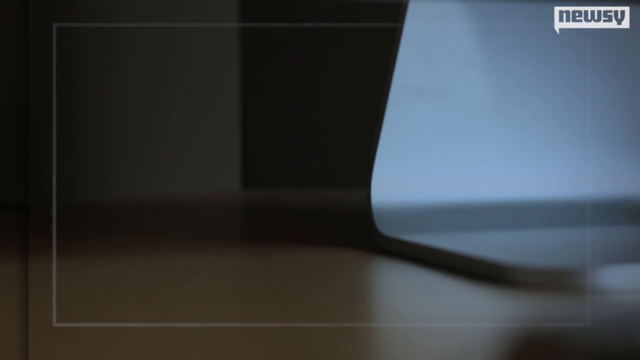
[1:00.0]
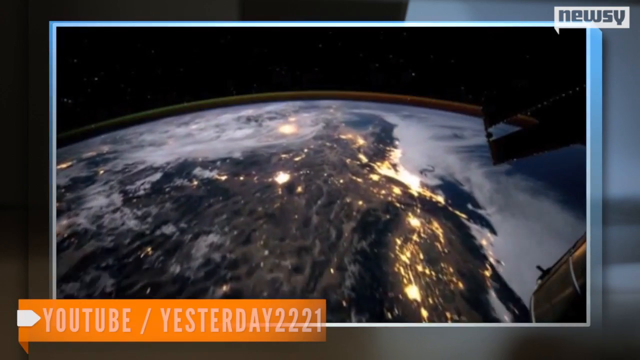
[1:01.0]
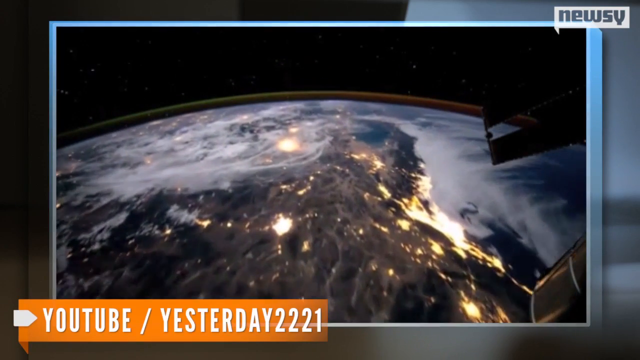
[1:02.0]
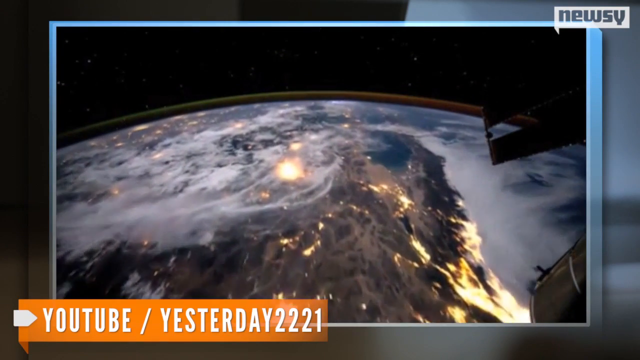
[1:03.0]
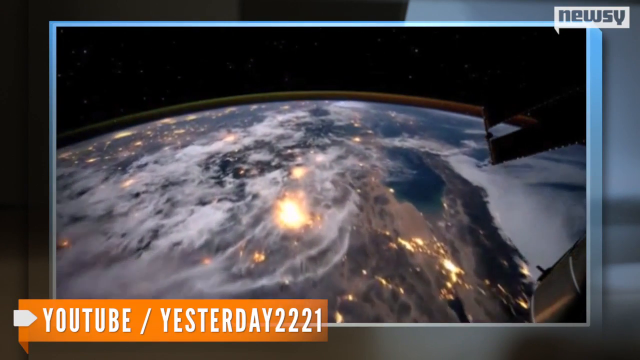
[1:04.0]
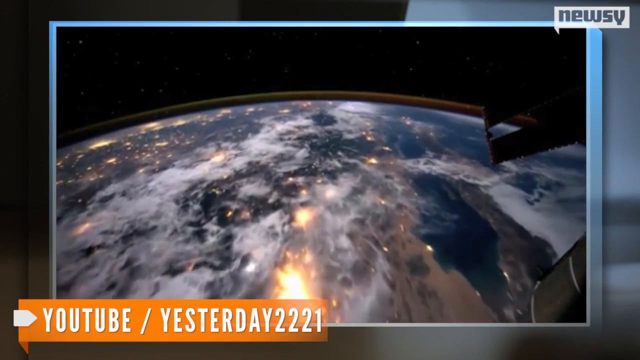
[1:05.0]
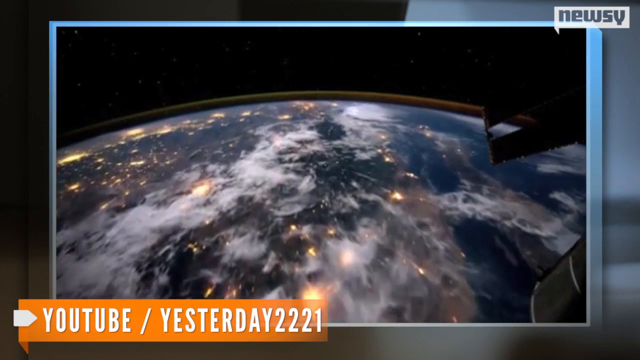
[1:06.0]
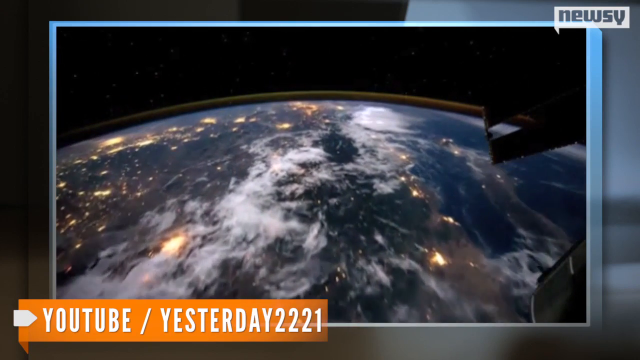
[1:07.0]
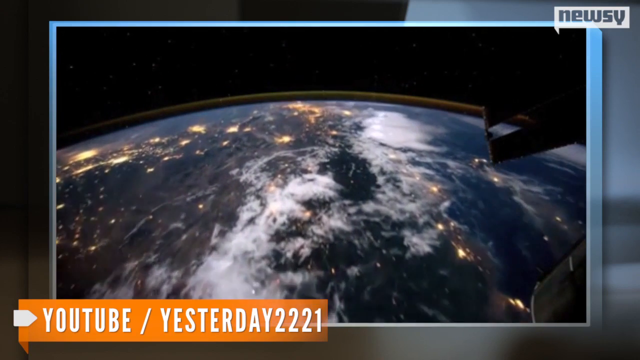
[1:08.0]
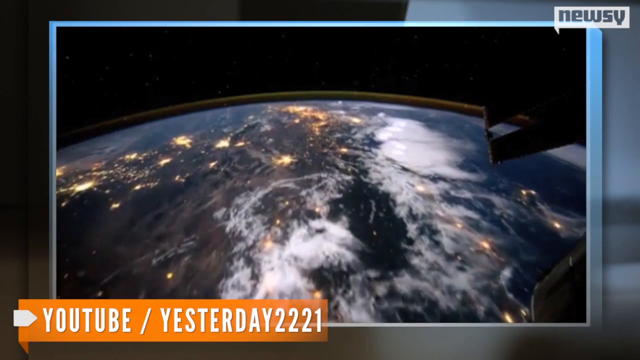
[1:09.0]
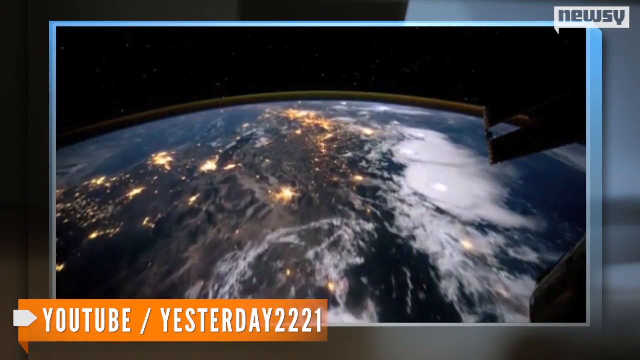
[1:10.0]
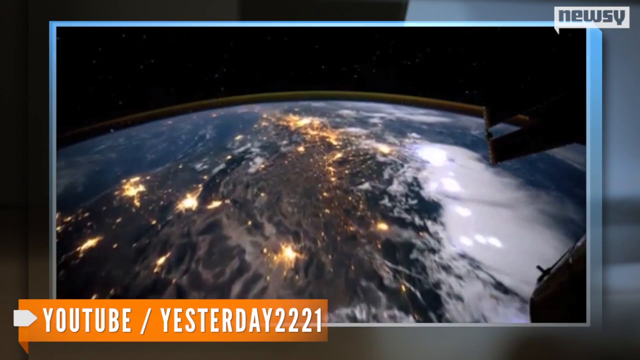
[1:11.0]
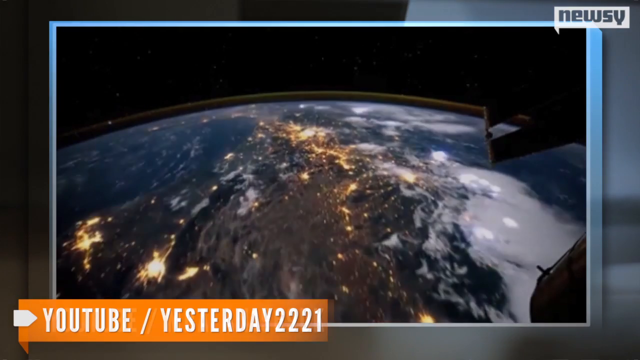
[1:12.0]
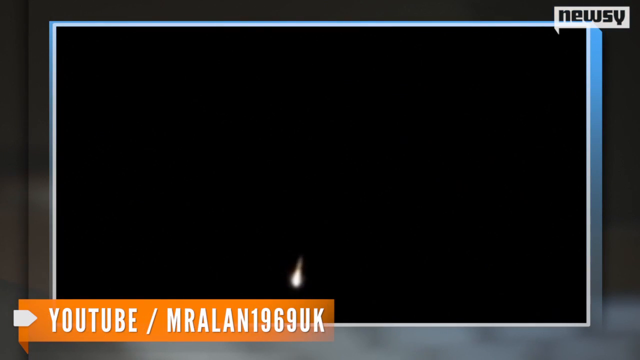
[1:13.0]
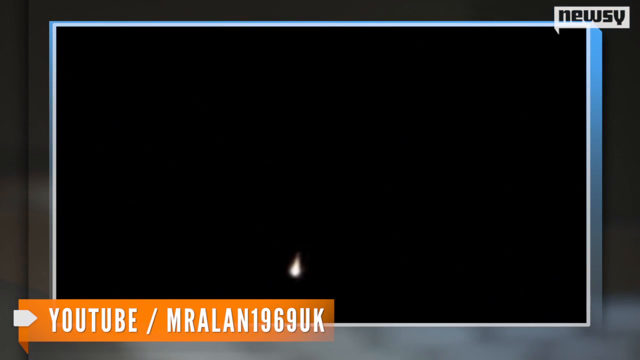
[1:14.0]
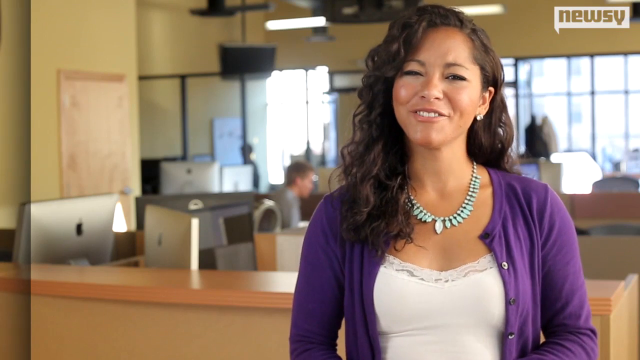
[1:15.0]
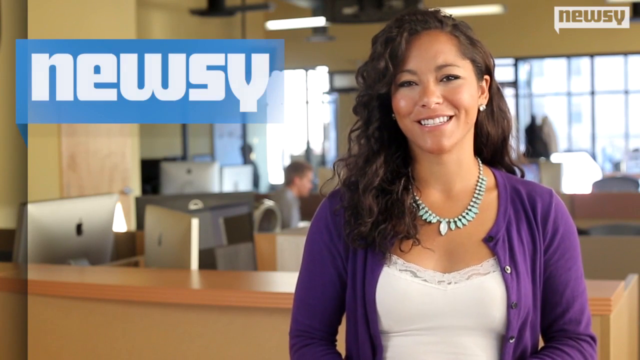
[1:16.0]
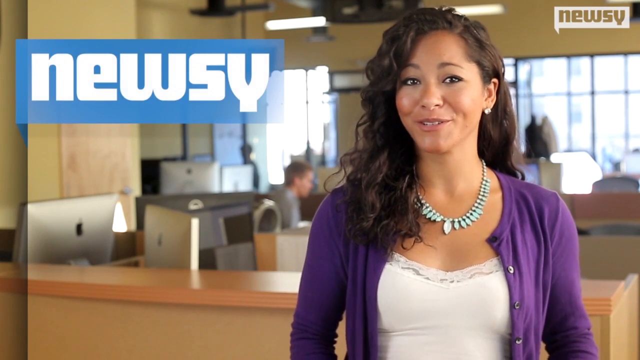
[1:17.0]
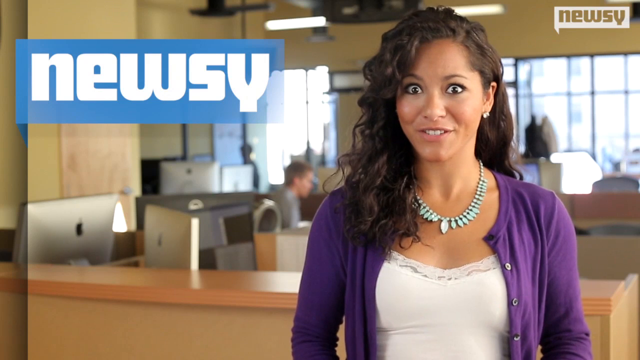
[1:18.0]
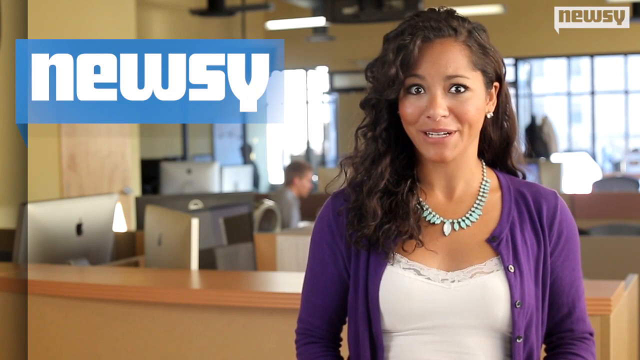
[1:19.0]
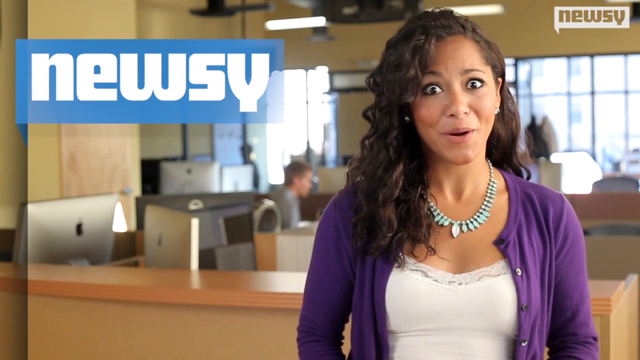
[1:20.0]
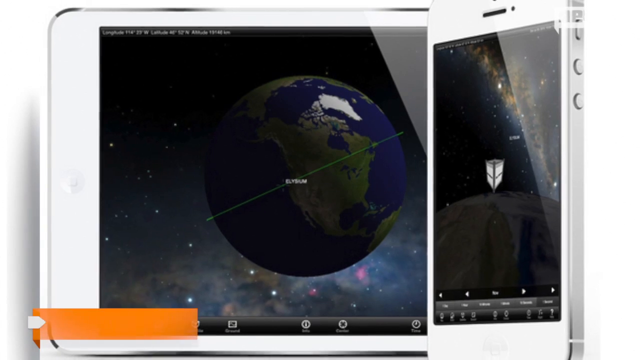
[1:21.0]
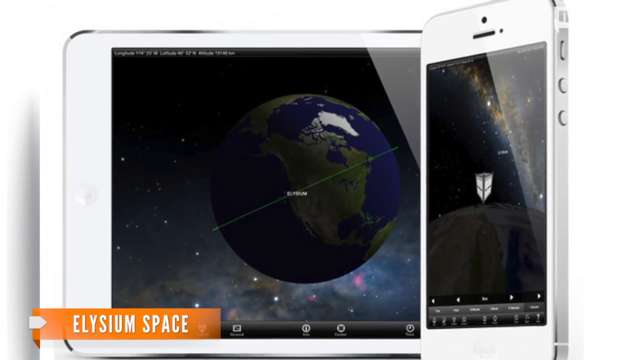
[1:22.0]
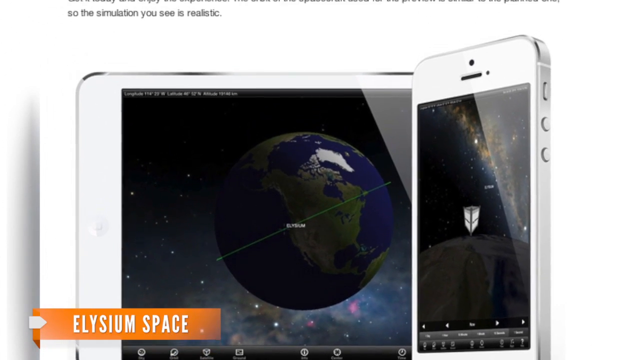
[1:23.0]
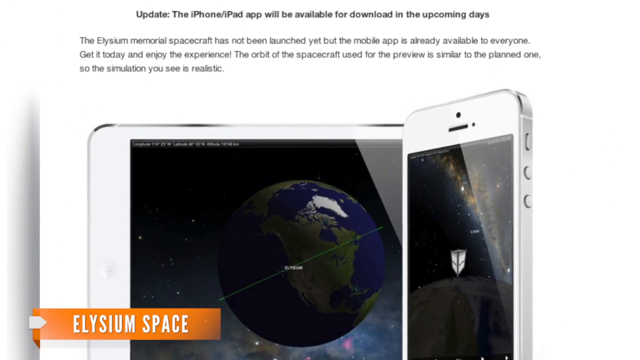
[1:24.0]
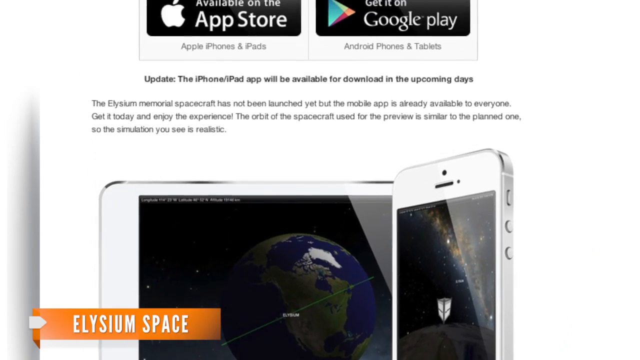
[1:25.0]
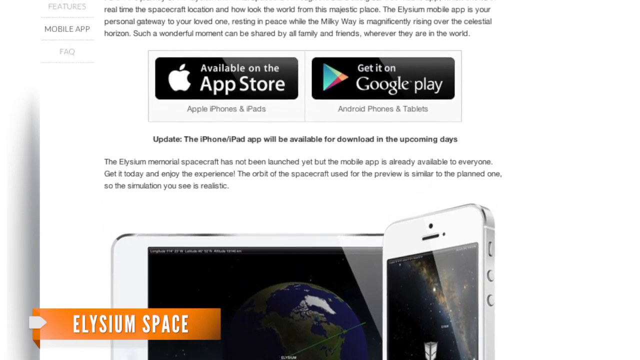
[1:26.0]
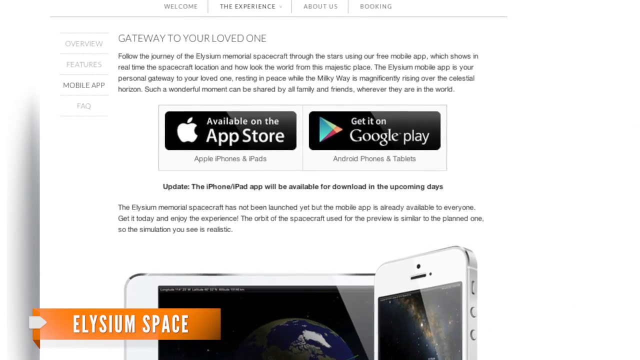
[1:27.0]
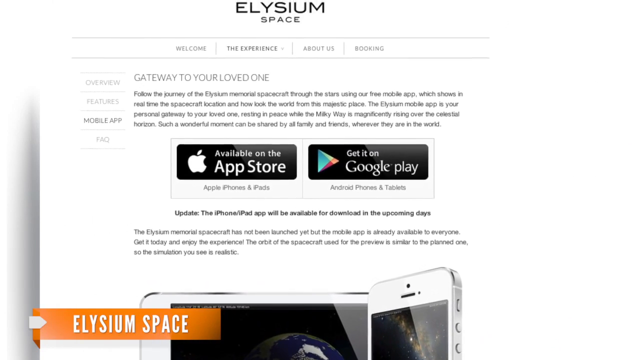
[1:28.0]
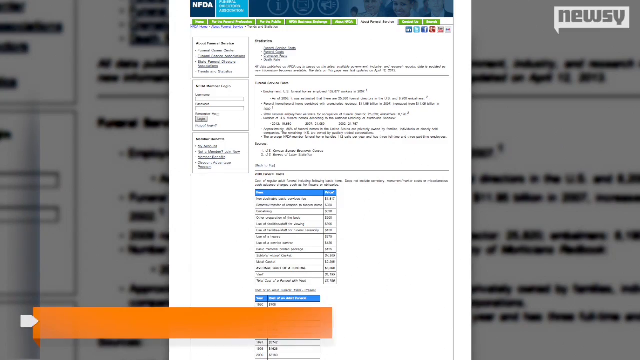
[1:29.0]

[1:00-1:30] What looks like a satellite records Earth from above.